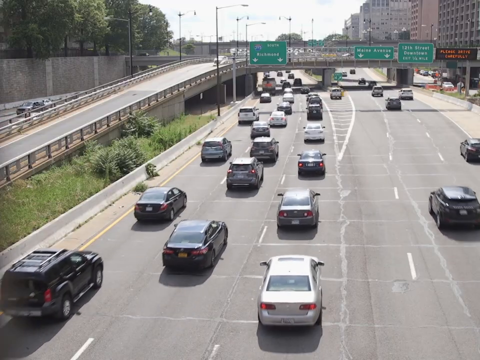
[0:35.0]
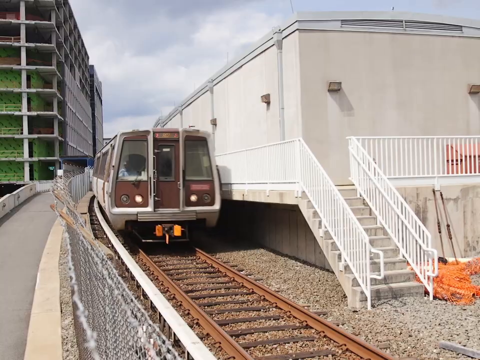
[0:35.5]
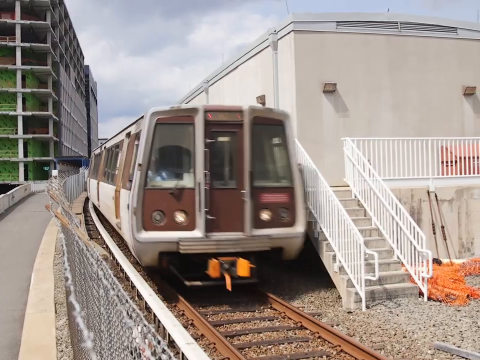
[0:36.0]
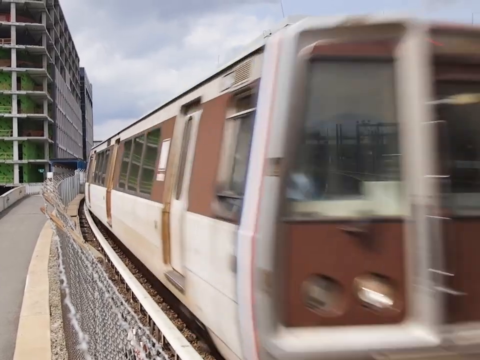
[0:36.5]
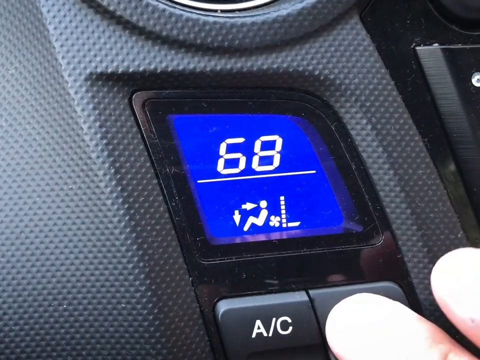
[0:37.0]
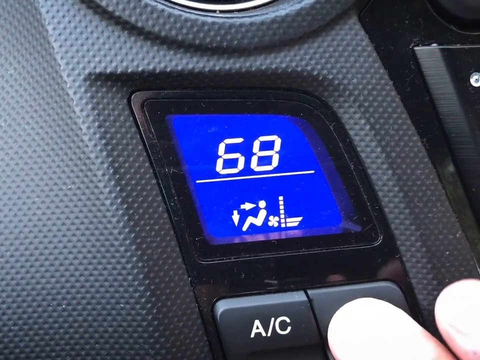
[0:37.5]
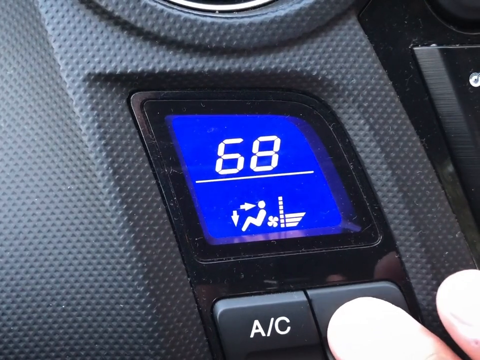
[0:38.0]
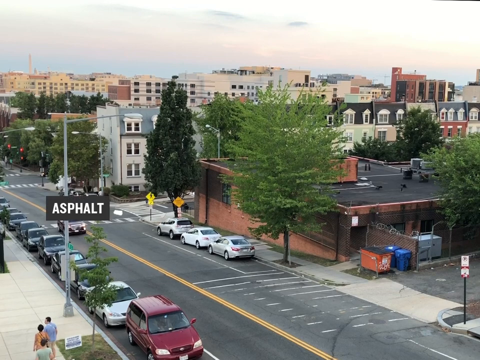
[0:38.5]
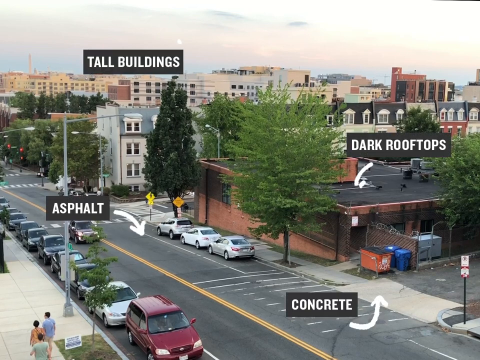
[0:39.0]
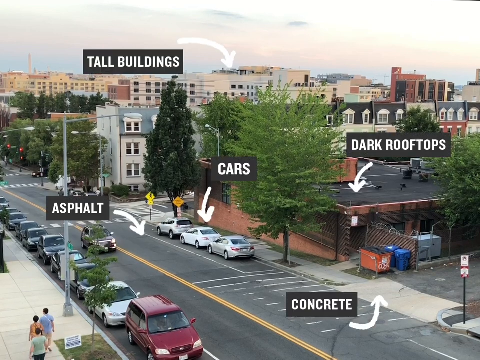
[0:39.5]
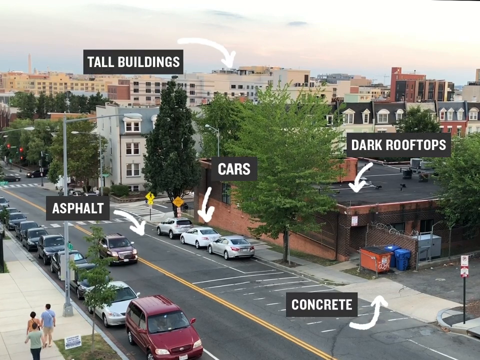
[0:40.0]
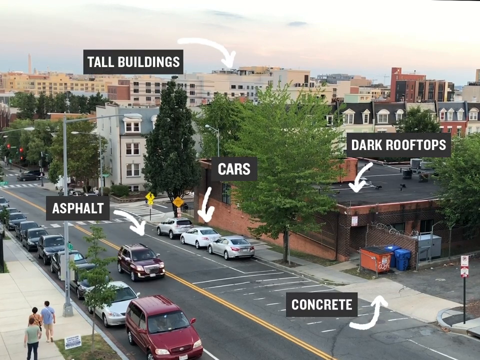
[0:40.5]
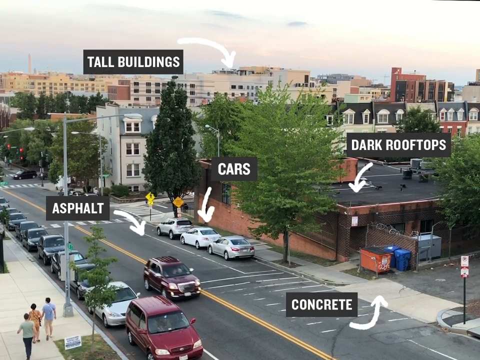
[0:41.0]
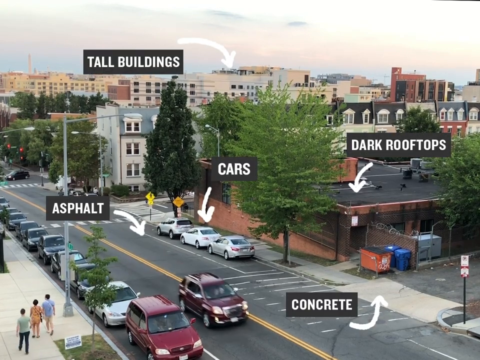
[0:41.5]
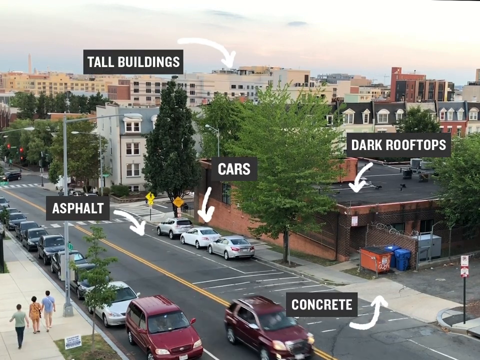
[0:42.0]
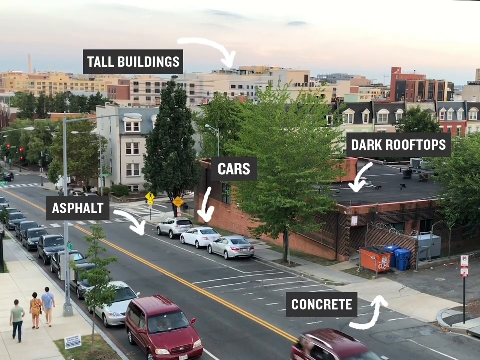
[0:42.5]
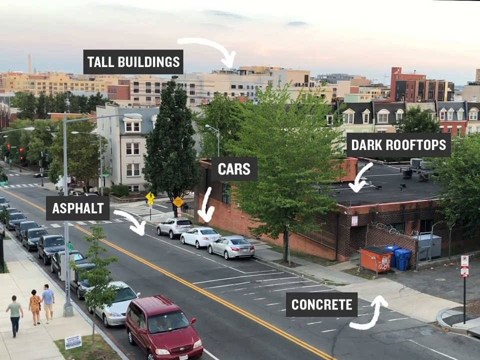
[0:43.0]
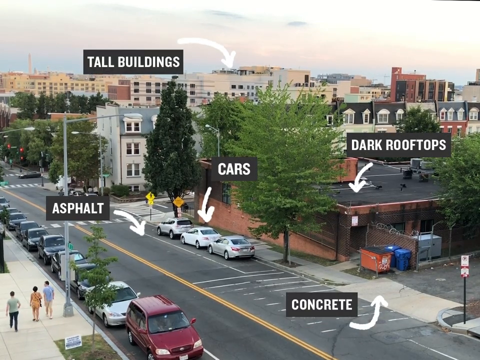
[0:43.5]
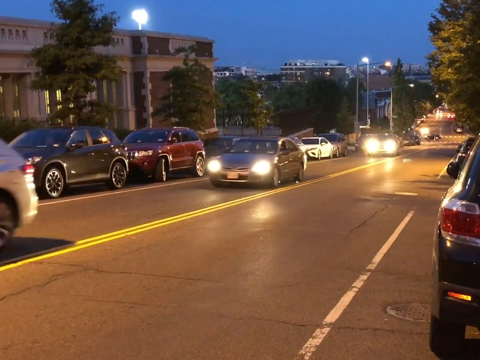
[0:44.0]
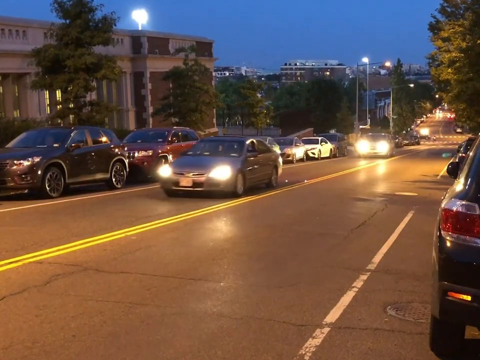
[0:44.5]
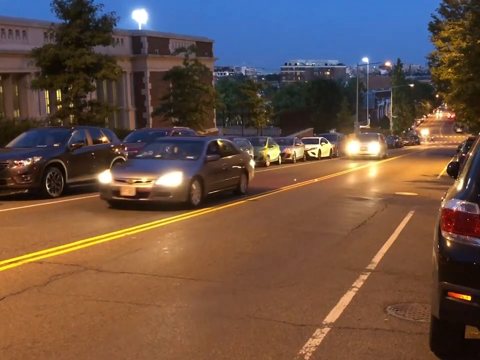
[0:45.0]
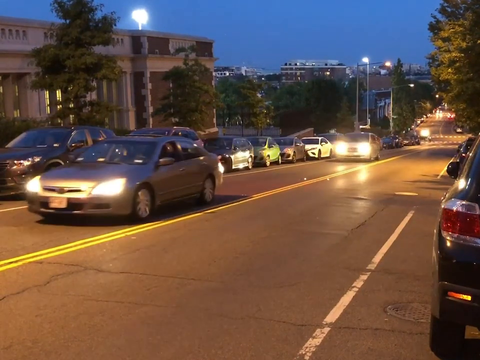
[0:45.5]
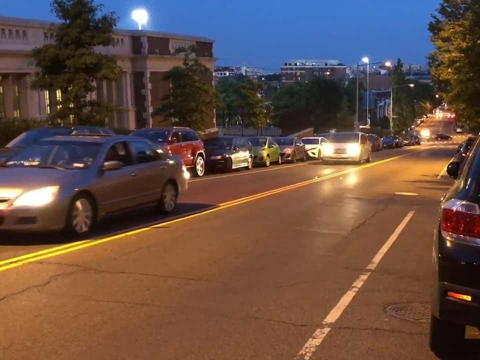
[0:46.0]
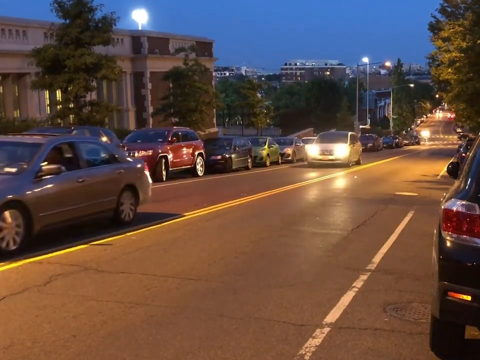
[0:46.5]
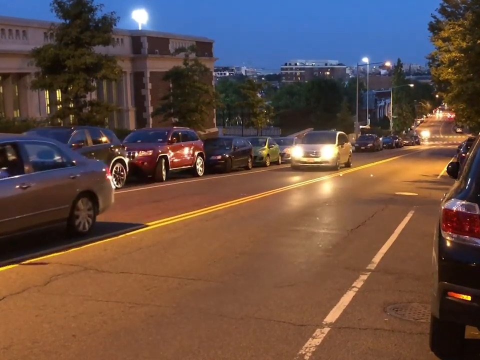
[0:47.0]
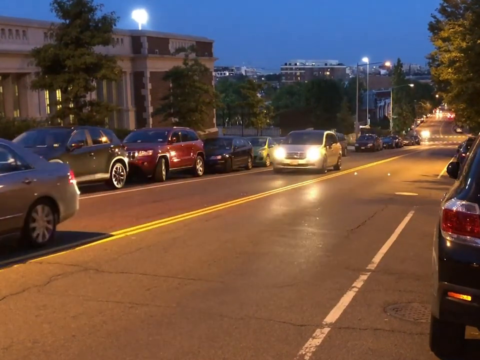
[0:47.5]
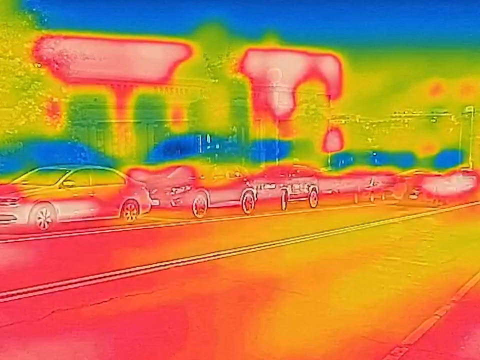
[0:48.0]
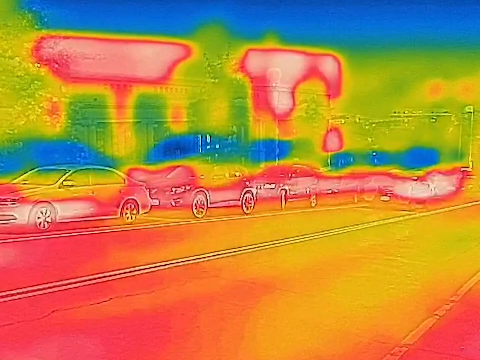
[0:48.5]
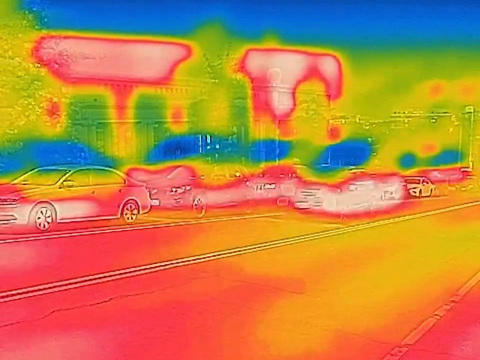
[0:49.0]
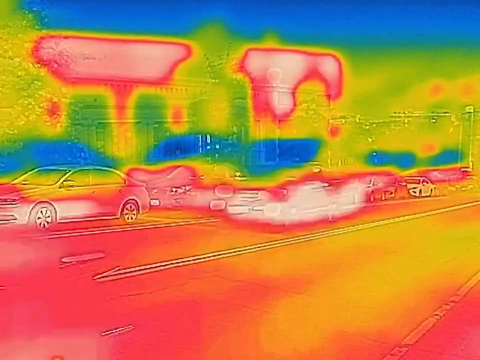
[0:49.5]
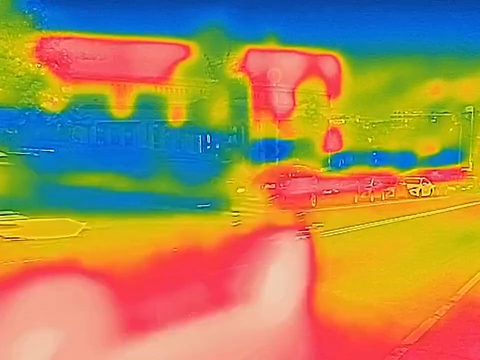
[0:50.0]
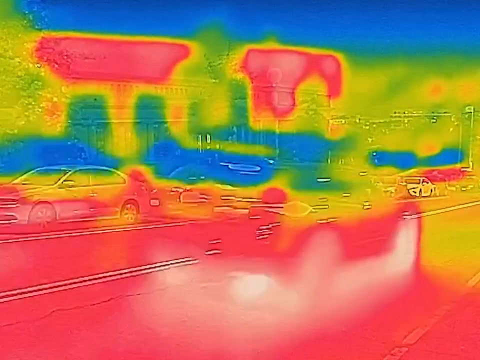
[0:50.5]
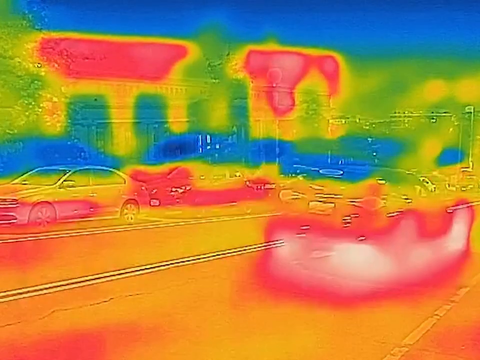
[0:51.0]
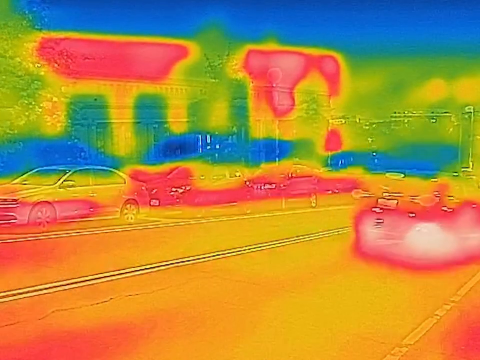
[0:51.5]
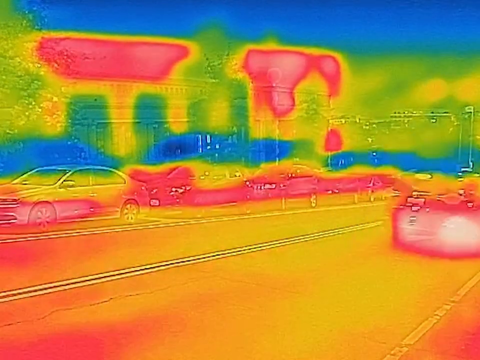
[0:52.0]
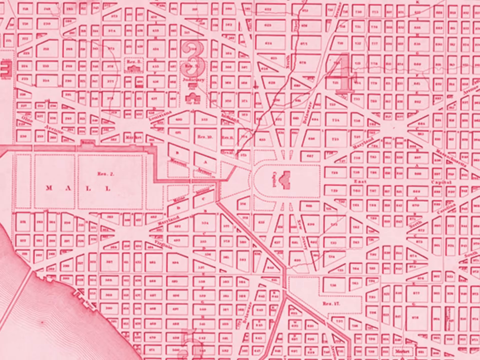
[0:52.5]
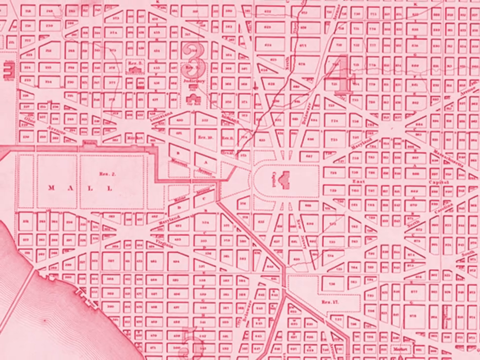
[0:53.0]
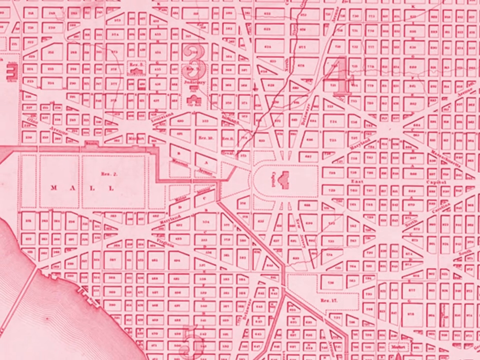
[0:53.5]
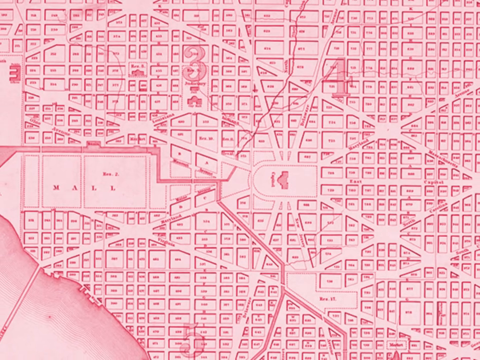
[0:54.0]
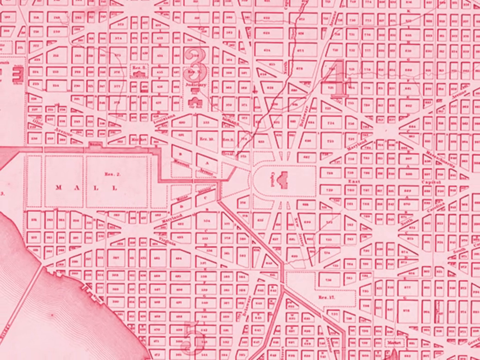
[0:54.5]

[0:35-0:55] The highway system appears, with about a dozen cars driving along. The scene changes to an older train, brown and rusted-looking in color with white doors, that looks very old. Next comes what looks to be a steering wheel, where the driver turns the temperature, the AC, up on the steering wheel. Another scene shows what looks to be a small city center, with cars parked on the side of the road and a few businesses and tall buildings in the back. Over the video, a few arrows point to the asphalt, concrete, dark rooftops, tall buildings and cars, probably implying that these draw more heat and make the overall temperature hotter. The scene then changes to a late-night view of the city, with a few cars driving by and many parked on the side of the road, and the heat map effect is applied over it. Lastly, there is a quick glance of what looks to be a map in red and white, hard to make out.